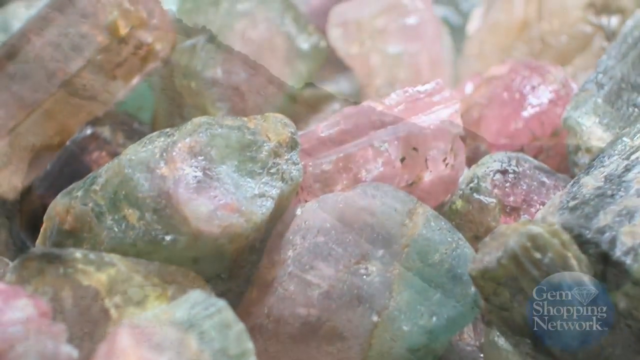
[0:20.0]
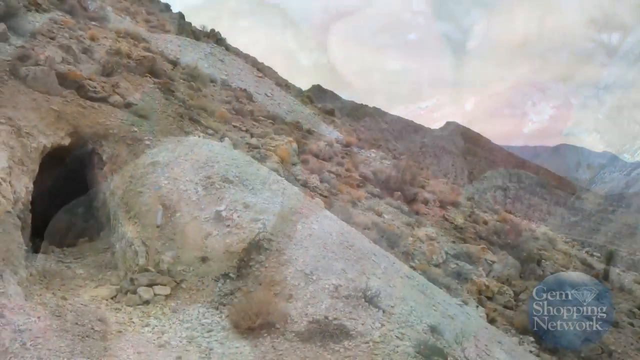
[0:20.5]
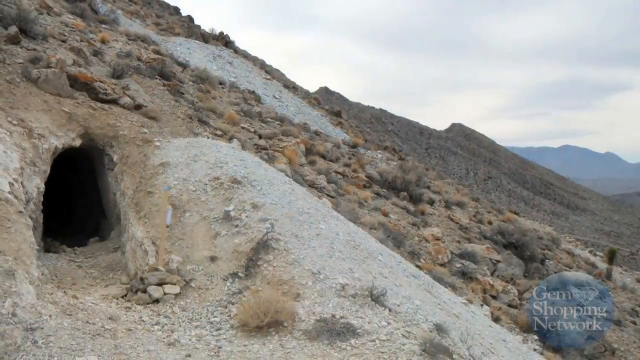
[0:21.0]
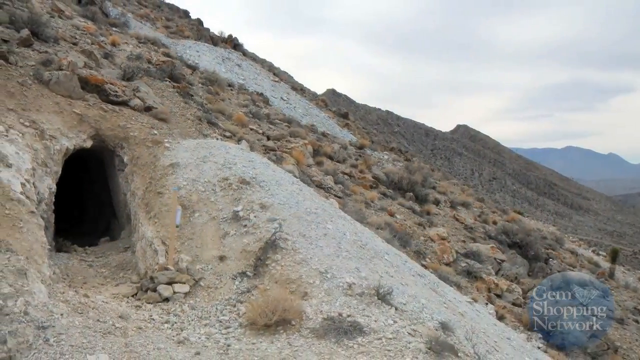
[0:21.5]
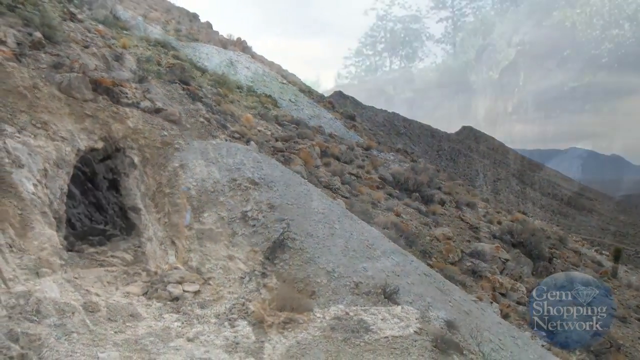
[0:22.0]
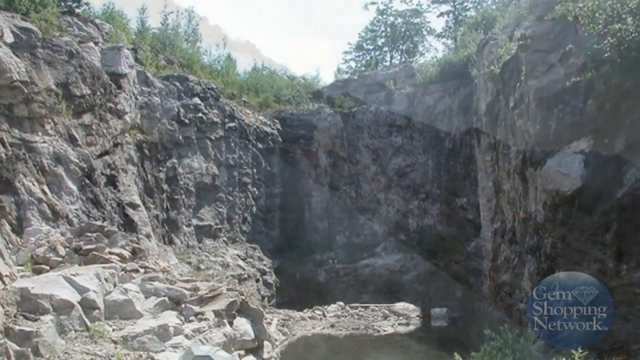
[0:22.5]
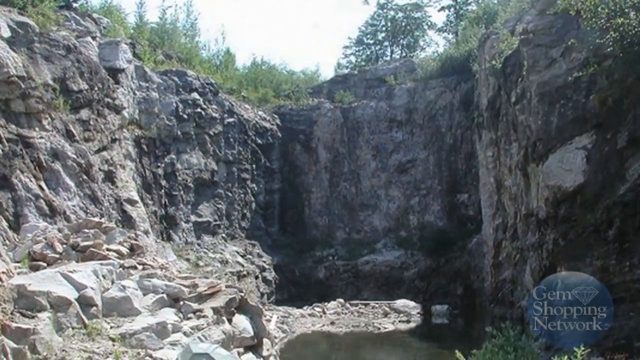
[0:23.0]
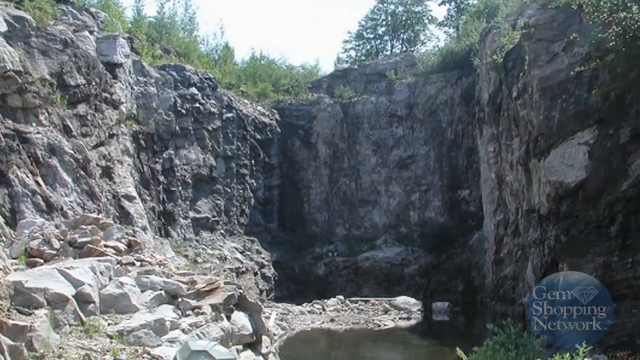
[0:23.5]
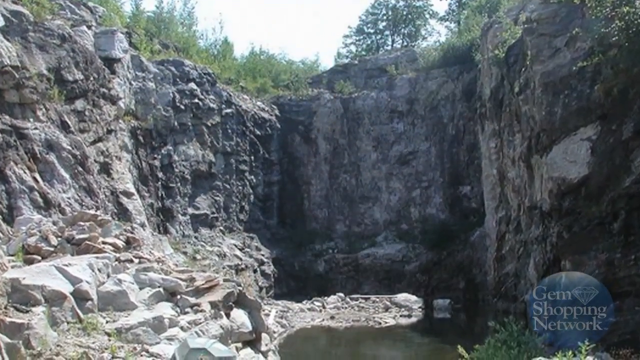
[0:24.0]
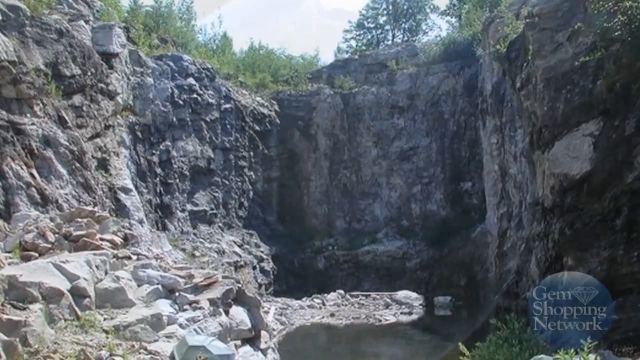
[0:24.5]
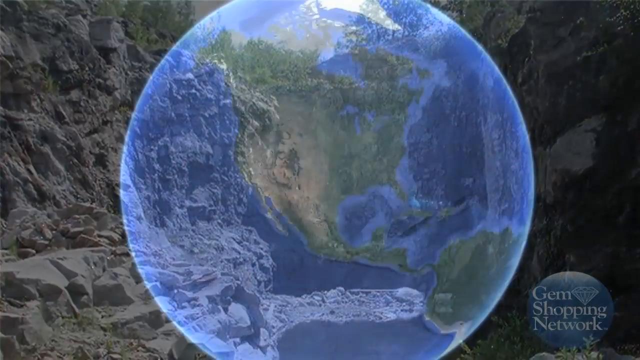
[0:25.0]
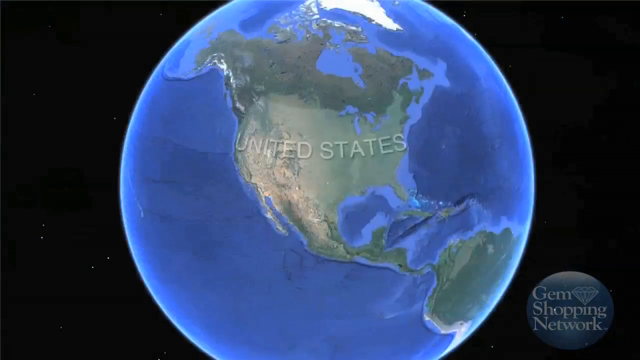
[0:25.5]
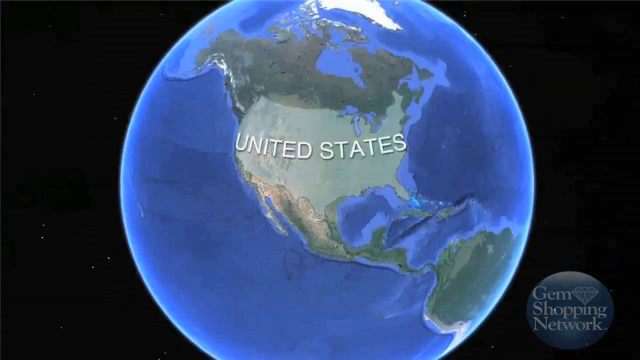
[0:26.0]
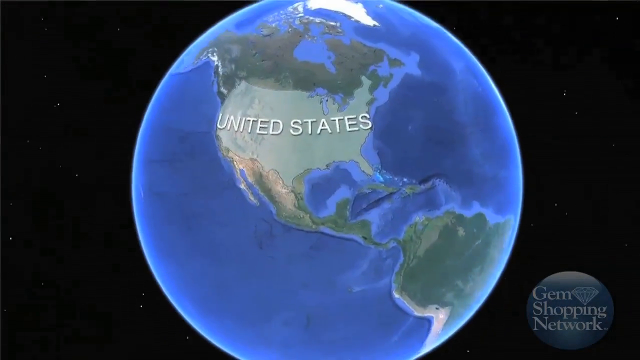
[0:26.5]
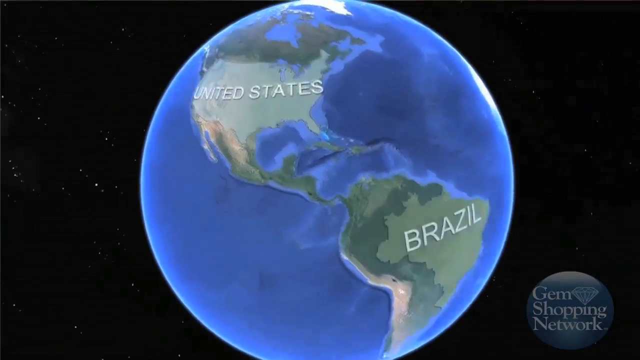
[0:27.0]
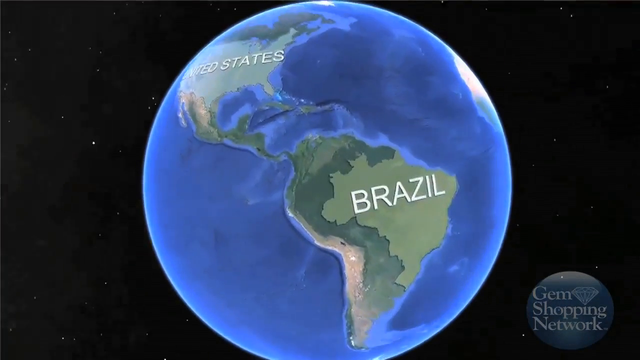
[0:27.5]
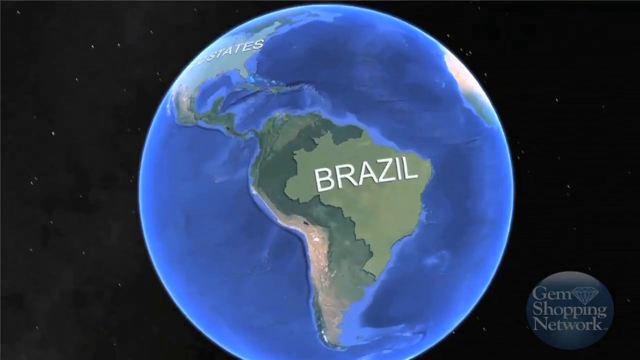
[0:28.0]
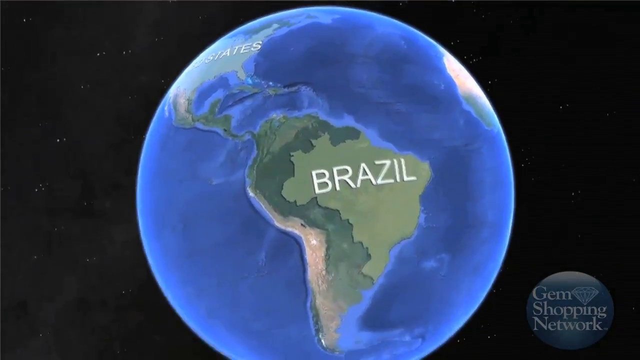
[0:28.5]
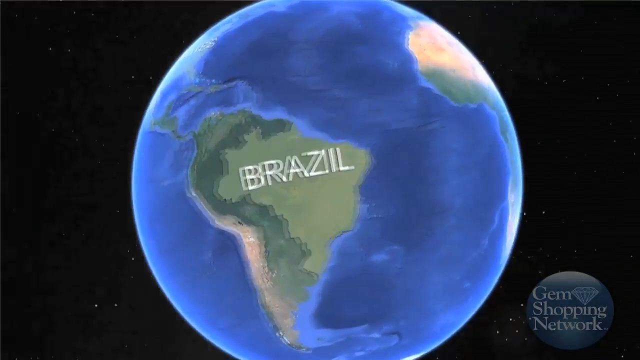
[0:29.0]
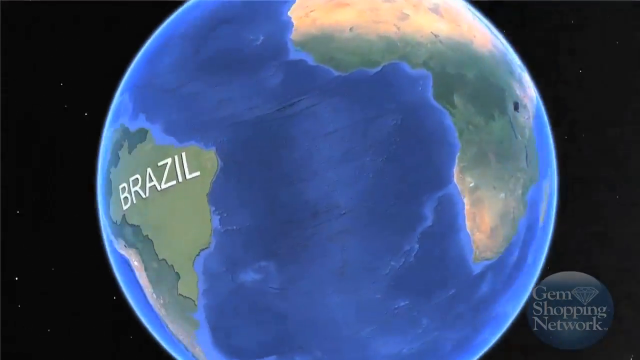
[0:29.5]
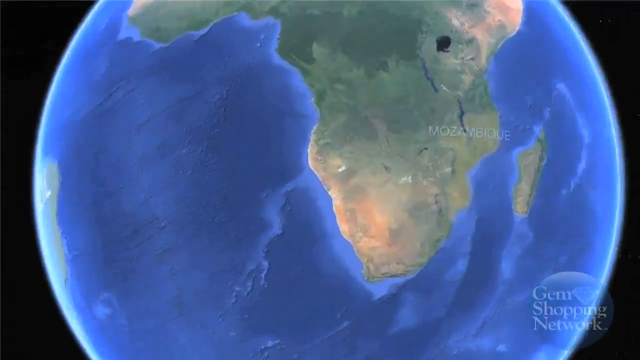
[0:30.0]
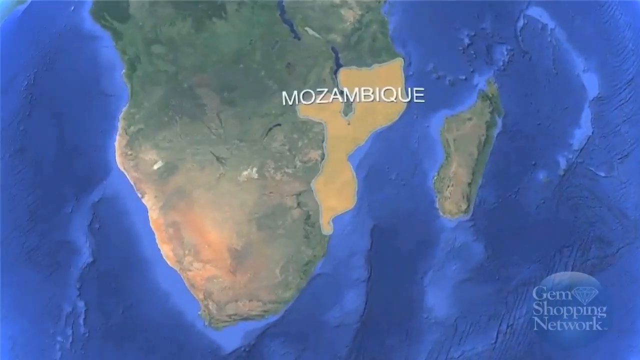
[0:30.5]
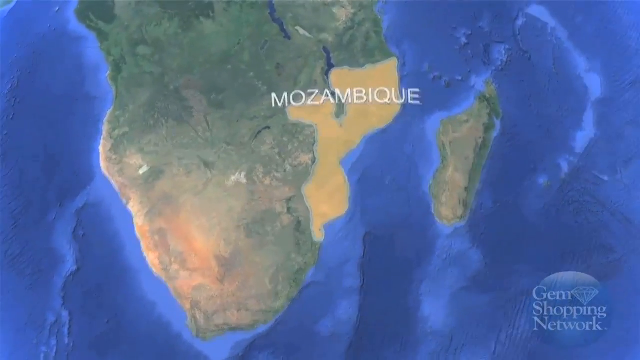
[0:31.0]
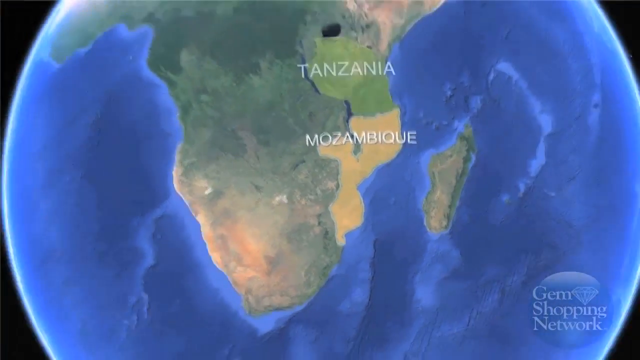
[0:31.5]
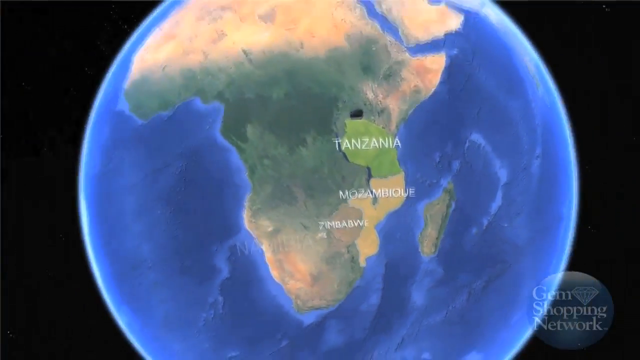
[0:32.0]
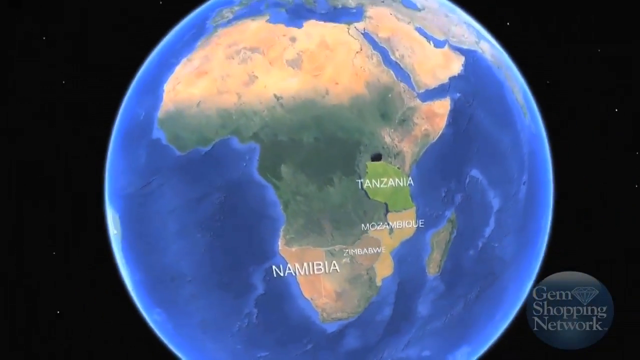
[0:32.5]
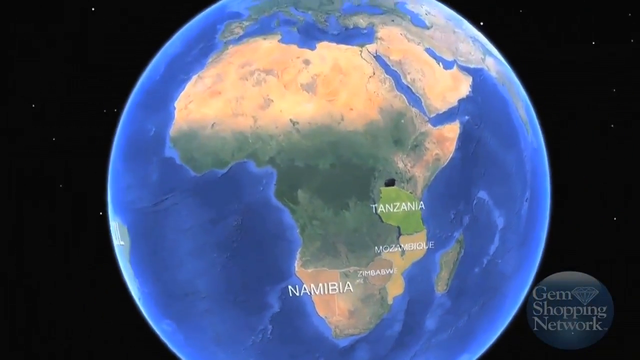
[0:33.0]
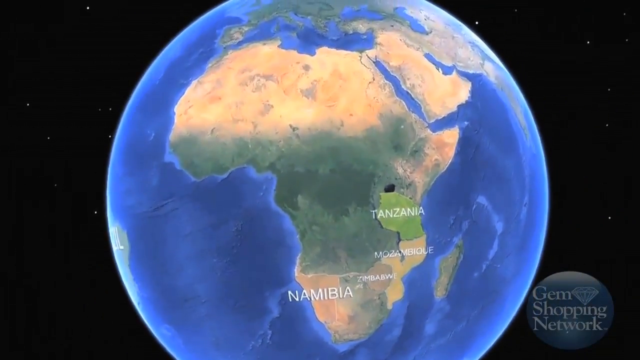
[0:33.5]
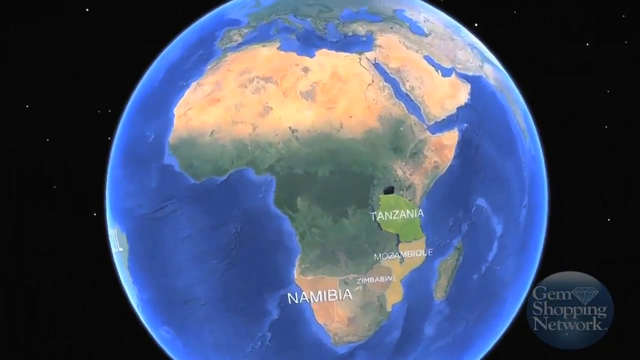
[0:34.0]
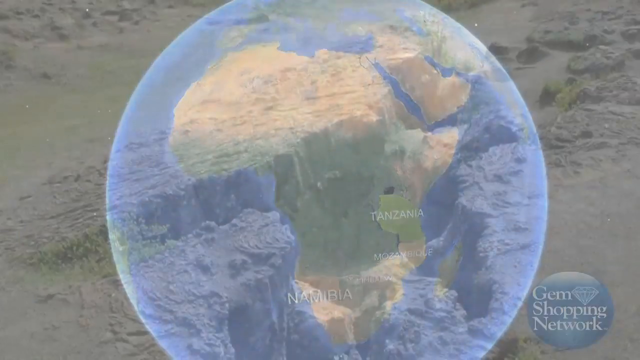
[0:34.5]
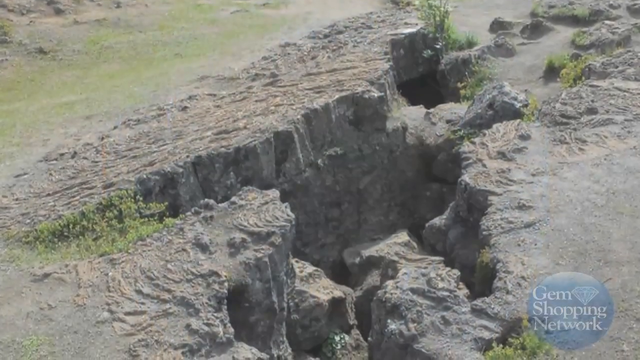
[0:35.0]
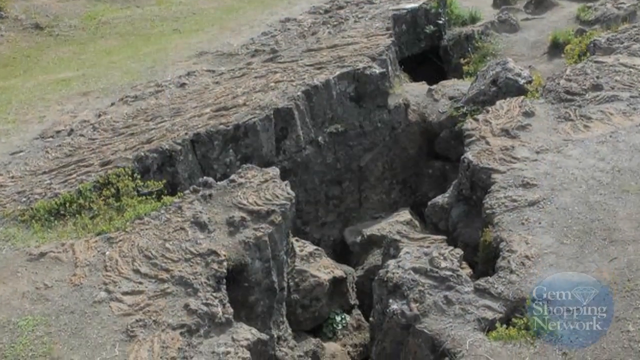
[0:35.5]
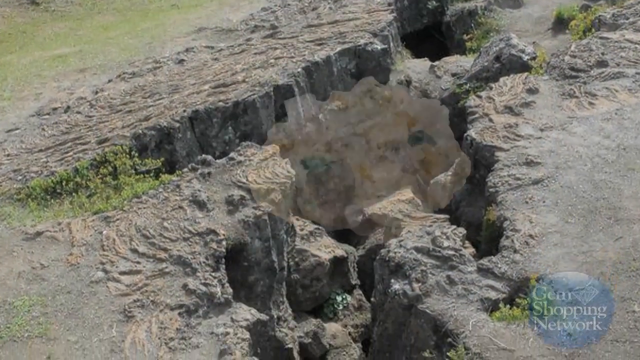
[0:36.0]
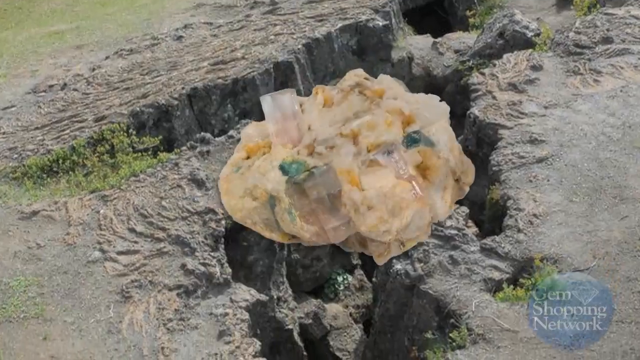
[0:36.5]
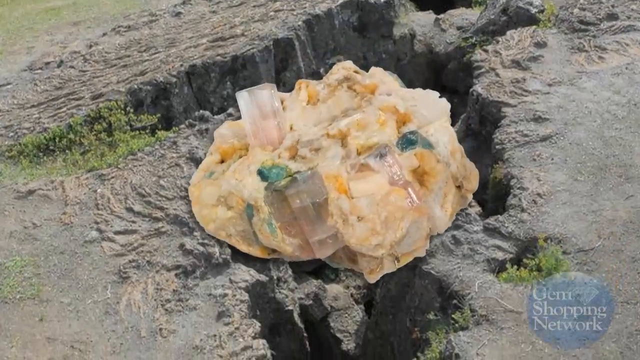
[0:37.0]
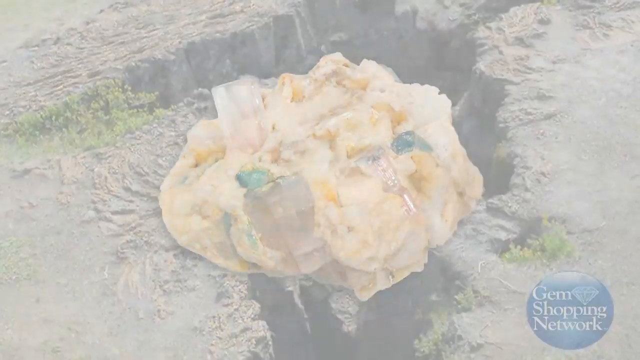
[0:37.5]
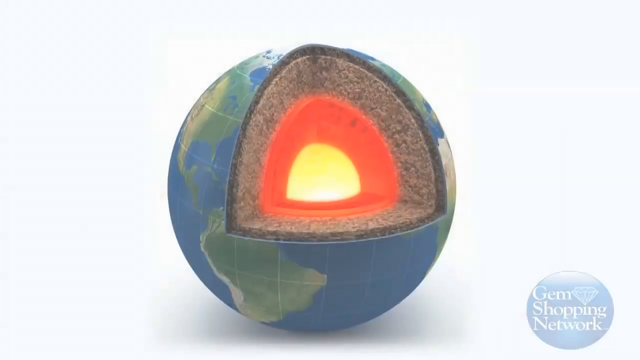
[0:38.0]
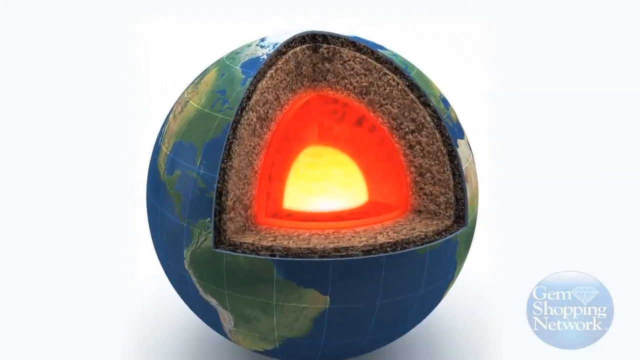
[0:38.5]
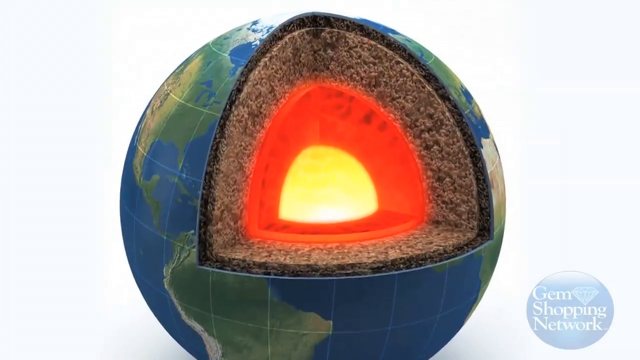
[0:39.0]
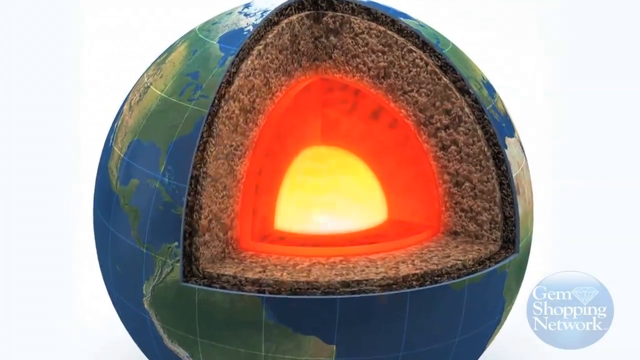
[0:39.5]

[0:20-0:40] Unfinished, unpolished stones of varying sizes, colors and shapes are shown, ranging from gray to pink to kind of a jade green to a forest green, with some amber-colored stones. The view then moves to a cave and pans around what appear to be mines rather than caves, apparently the area where the stones are obtained. An image of a globe follows, heading from the United States toward Brazil and then to Africa, apparently somewhere in South Africa. A large unfinished stone appears, followed by a cross-section of the earth showing the molten core and the different layers of the earth's crust.